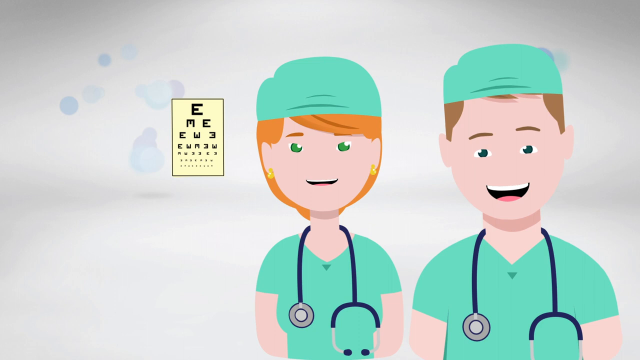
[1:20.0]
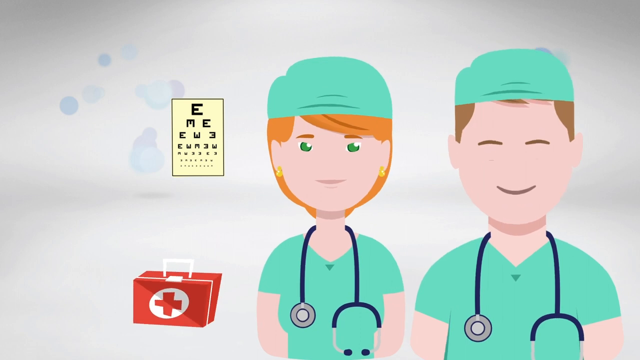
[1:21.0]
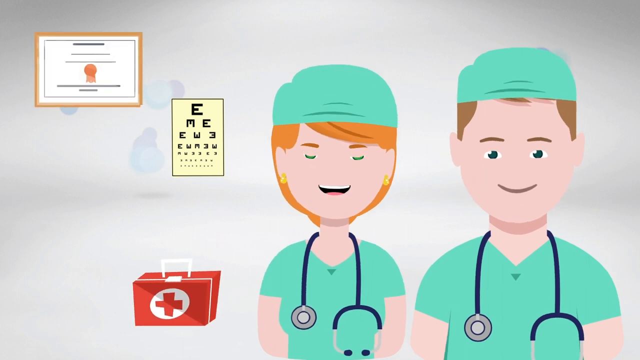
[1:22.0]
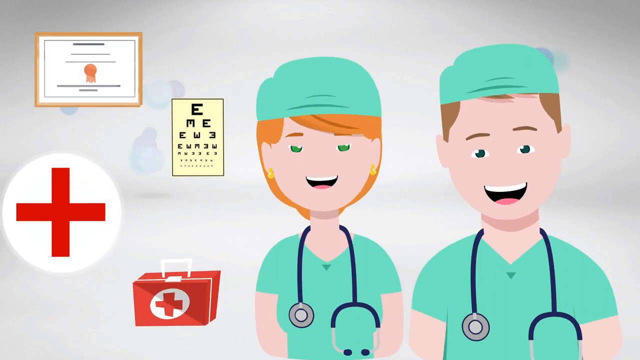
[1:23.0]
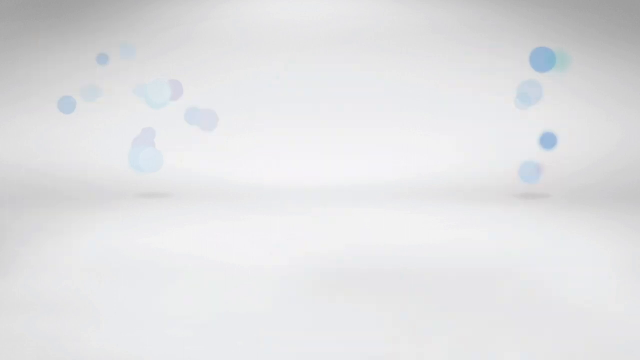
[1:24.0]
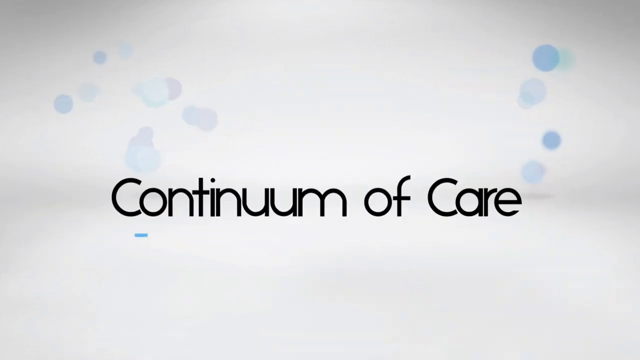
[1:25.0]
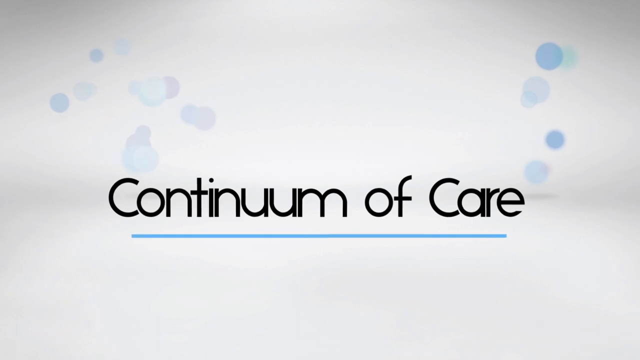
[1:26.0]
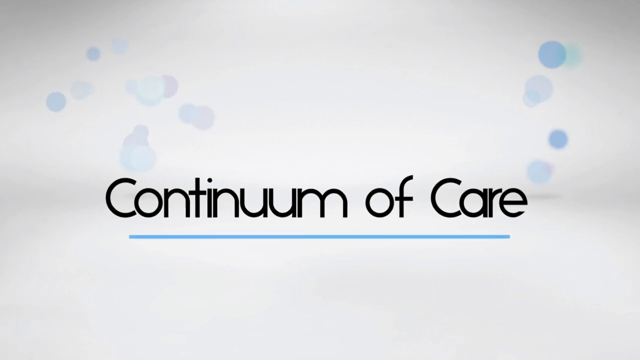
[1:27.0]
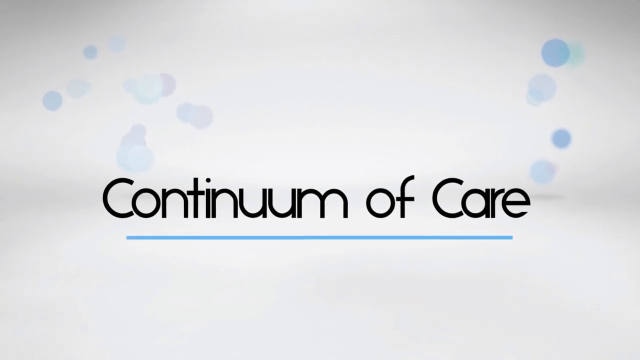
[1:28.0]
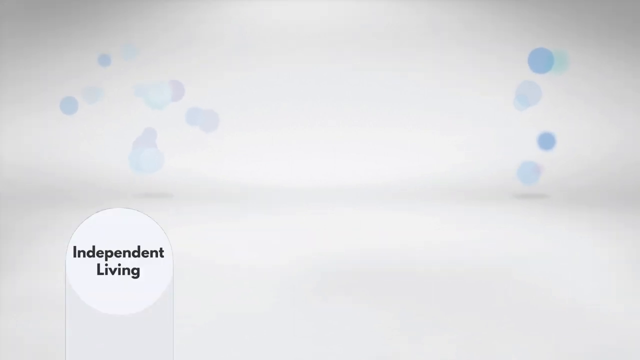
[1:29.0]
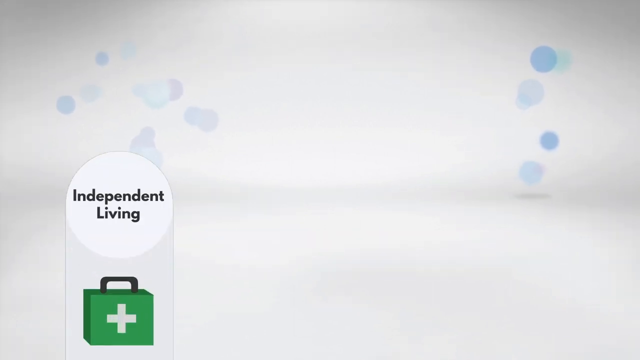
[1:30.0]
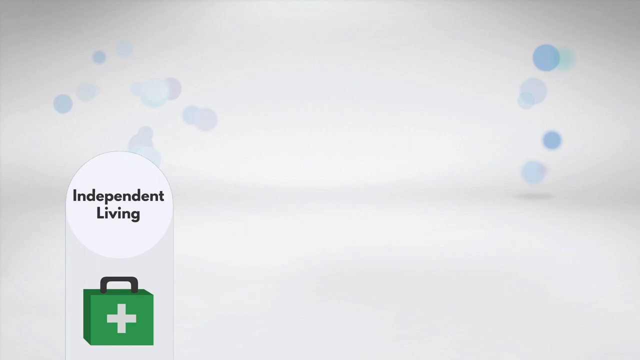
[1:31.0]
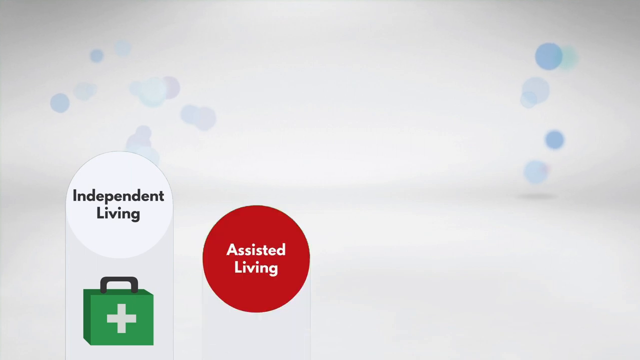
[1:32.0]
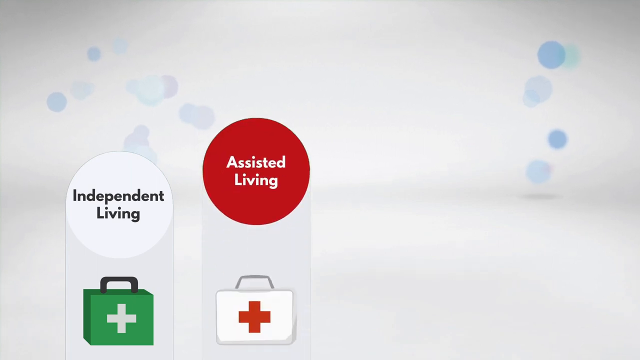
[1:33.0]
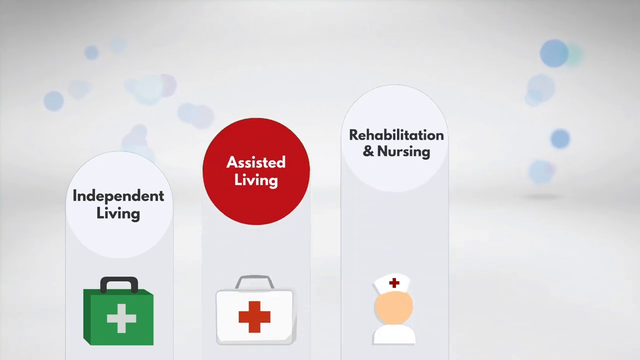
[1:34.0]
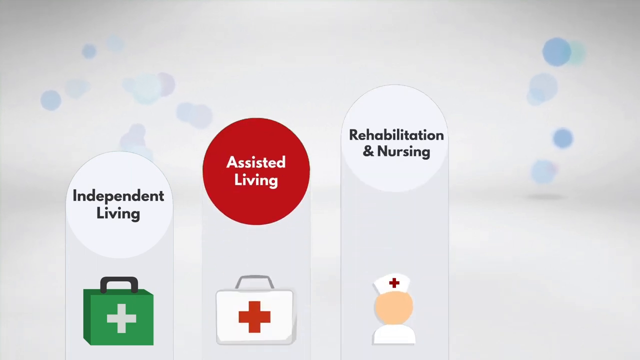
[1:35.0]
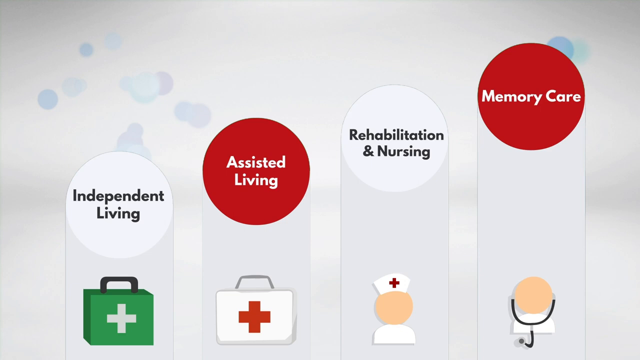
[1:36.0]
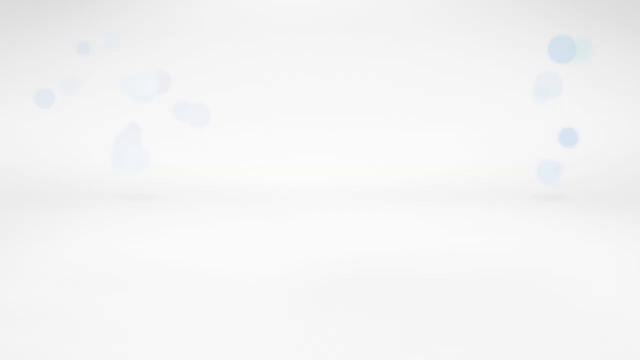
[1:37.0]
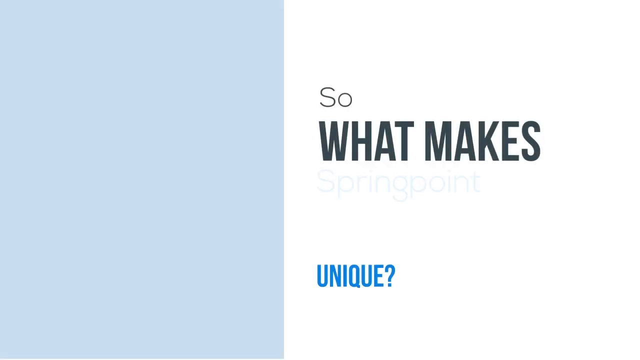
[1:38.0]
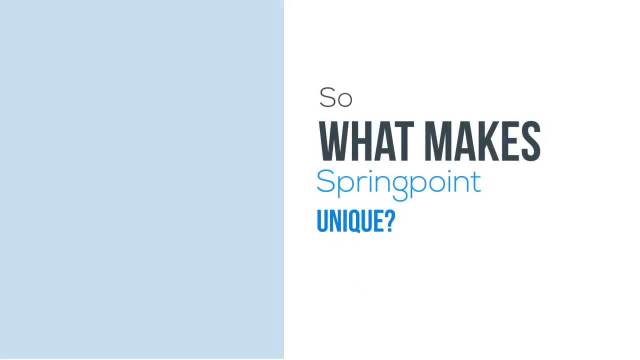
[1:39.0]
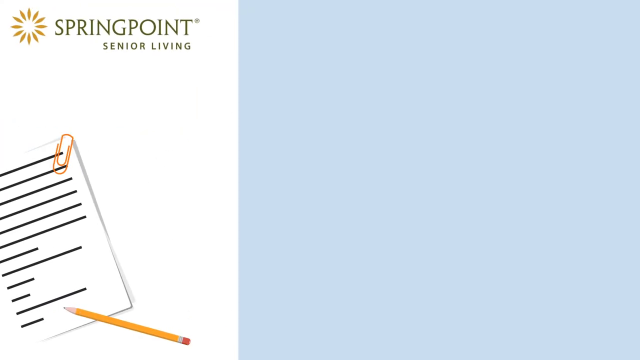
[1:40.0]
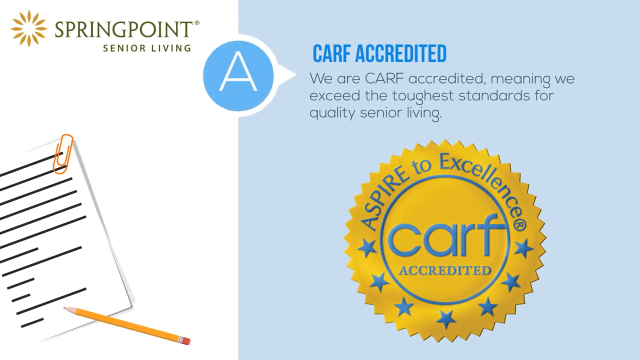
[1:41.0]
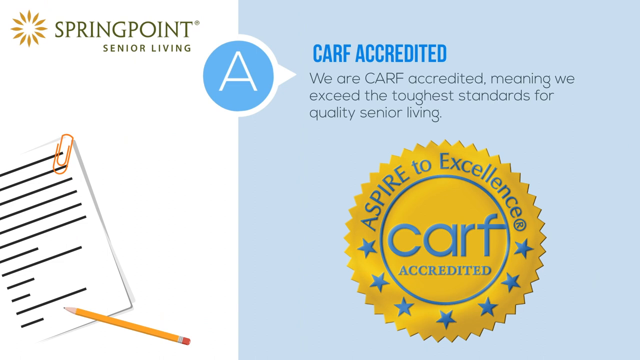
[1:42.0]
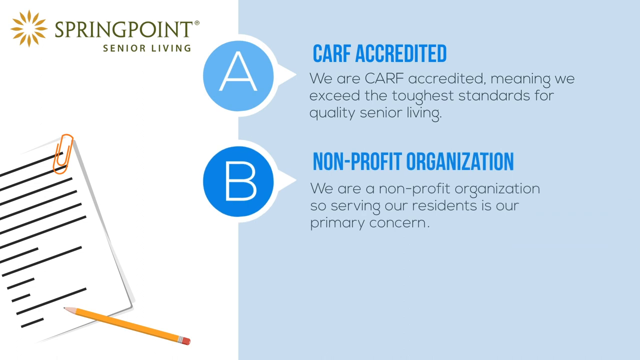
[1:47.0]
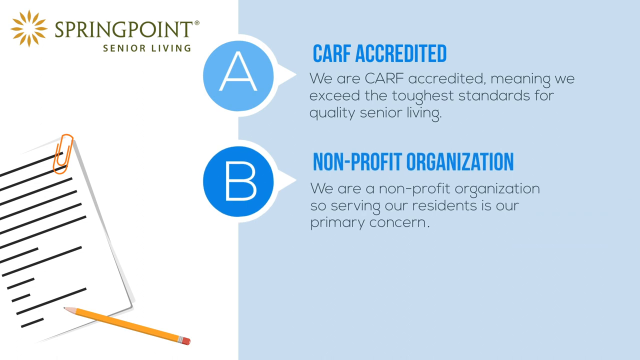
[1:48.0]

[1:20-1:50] The medical professionals appear with images of different things behind them: an eye test chart, a first aid kit, a red cross and a certificate. Text pops up reading "continuum of care" in black writing with a blue underline. On the next screen, the same background has pop-ups of different aspects of healthcare: independent living, assisted living, rehabilitation and nursing, and memory care, each with a symbol underneath. Text then appears reading "so what makes SpringPoint so unique?" A paragraph states that it is CARF accredited, shown with a certificate, and that they are a non-profit organization; these are listed as A and B. The CARF accreditation is described as meaning they exceed the toughest standards for quality senior living.